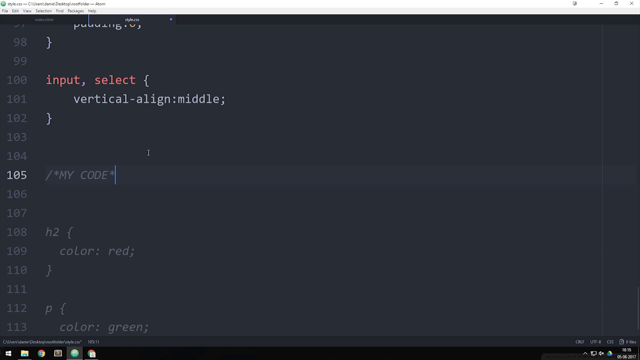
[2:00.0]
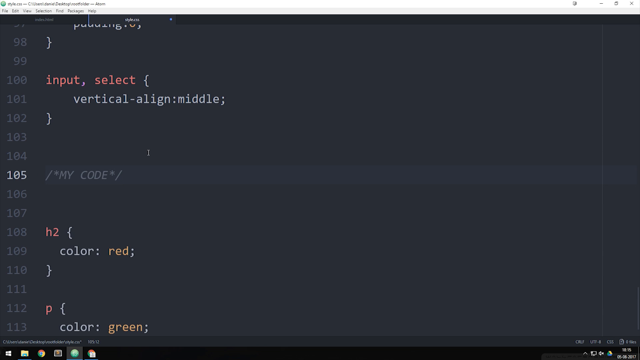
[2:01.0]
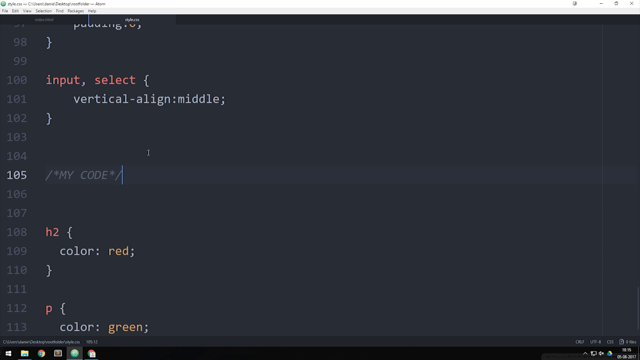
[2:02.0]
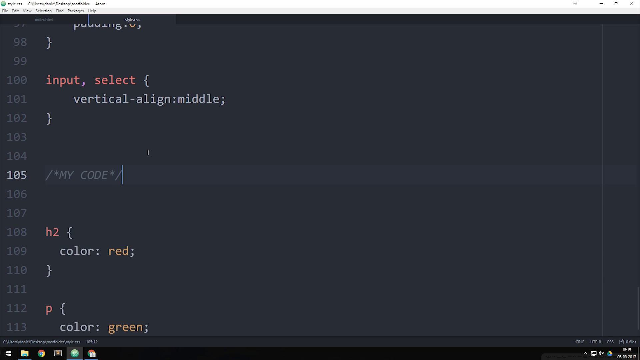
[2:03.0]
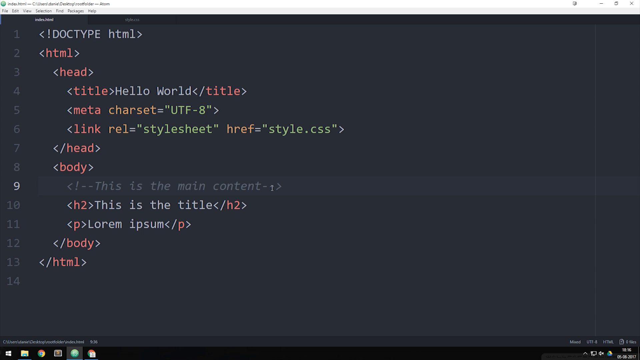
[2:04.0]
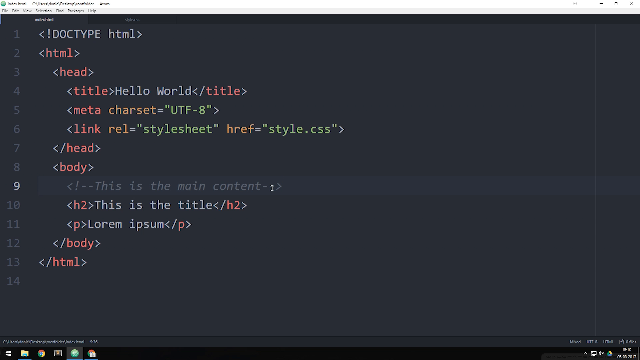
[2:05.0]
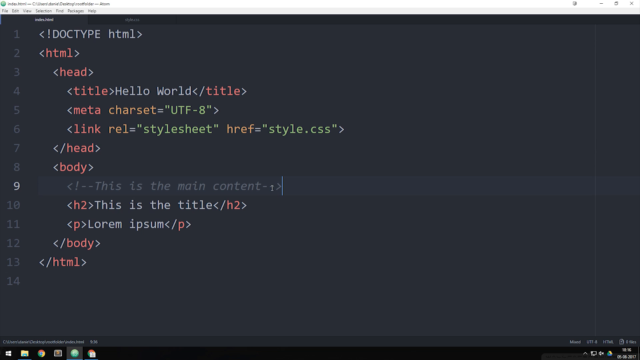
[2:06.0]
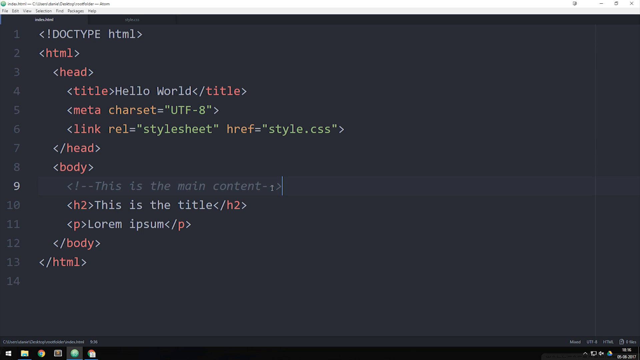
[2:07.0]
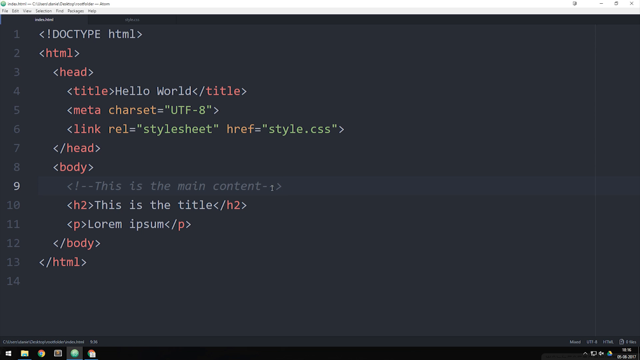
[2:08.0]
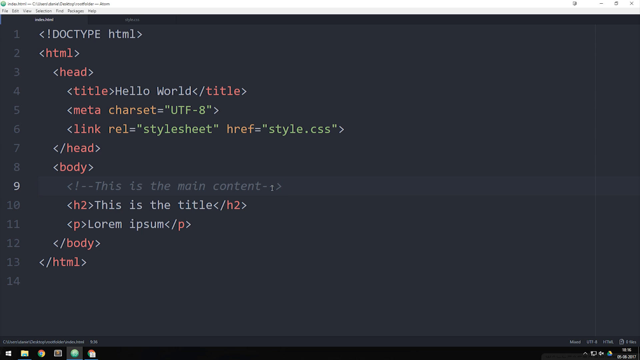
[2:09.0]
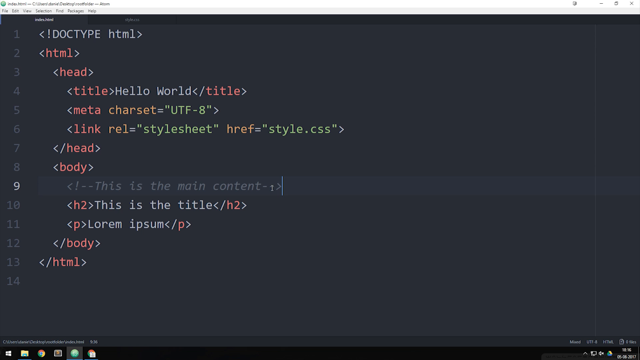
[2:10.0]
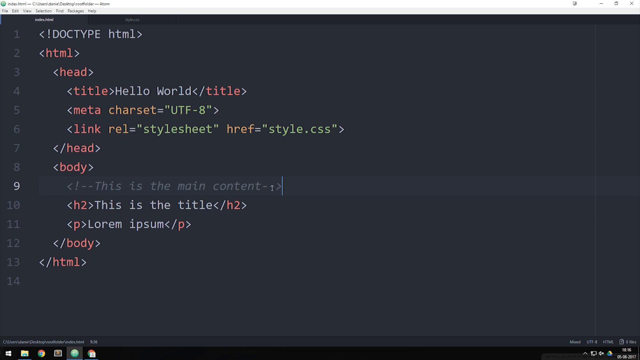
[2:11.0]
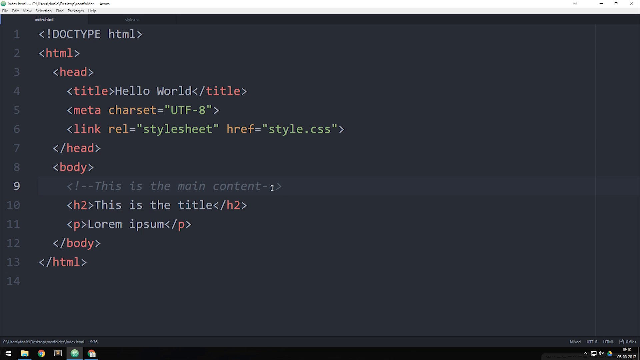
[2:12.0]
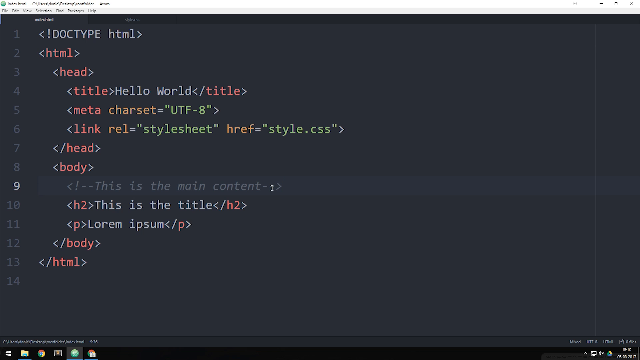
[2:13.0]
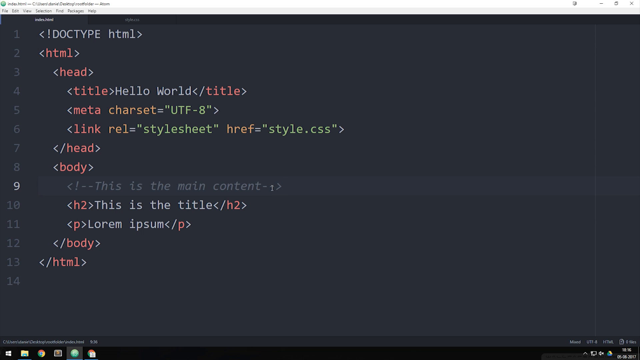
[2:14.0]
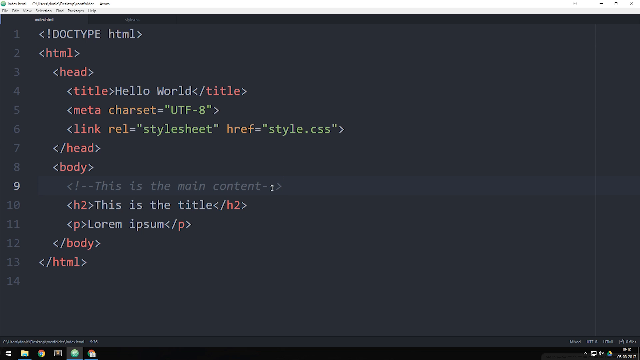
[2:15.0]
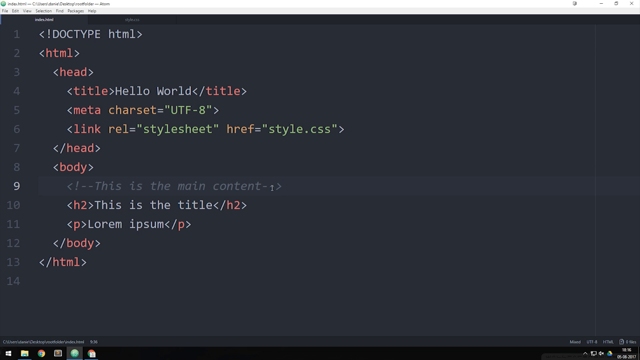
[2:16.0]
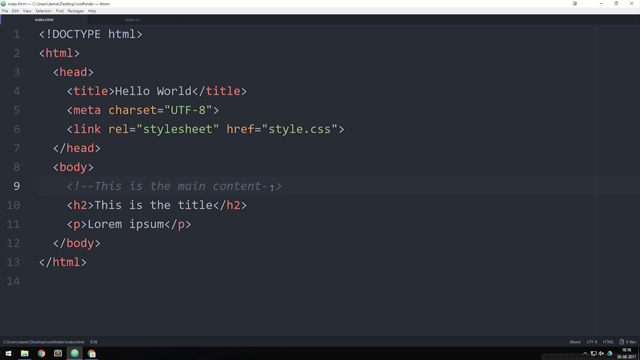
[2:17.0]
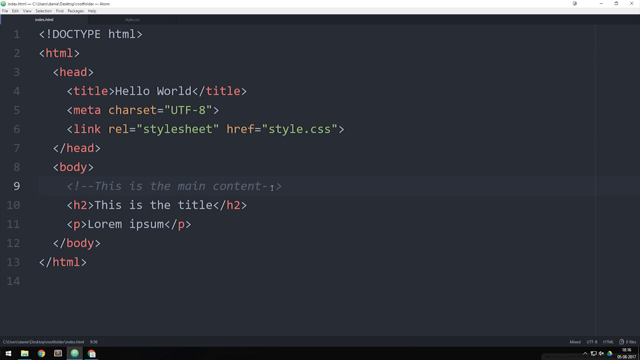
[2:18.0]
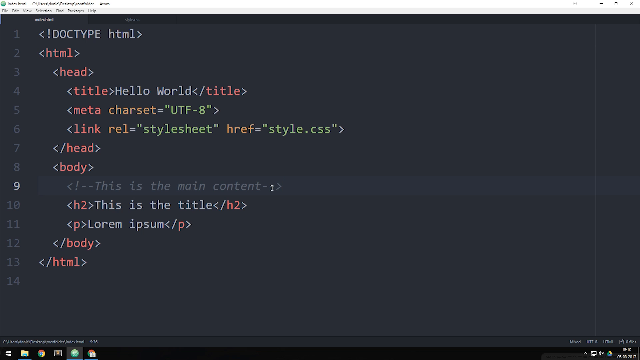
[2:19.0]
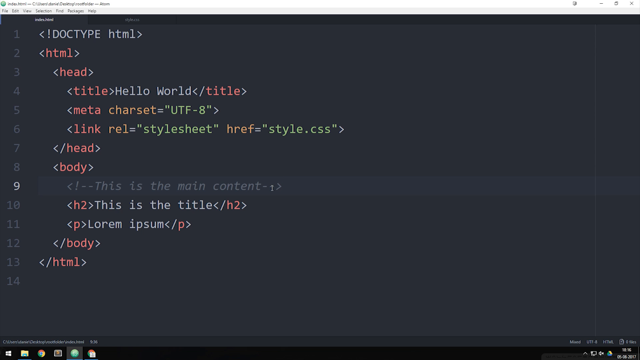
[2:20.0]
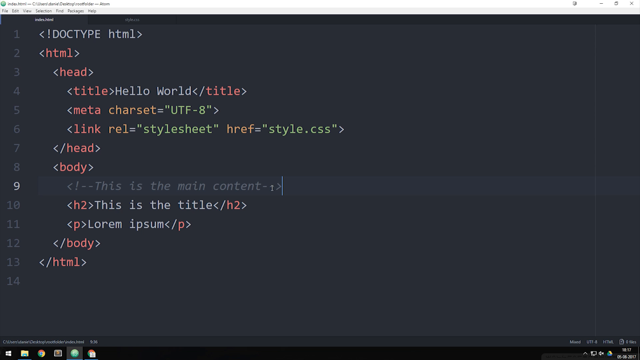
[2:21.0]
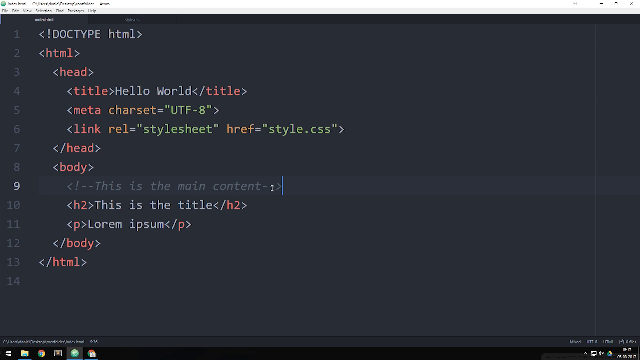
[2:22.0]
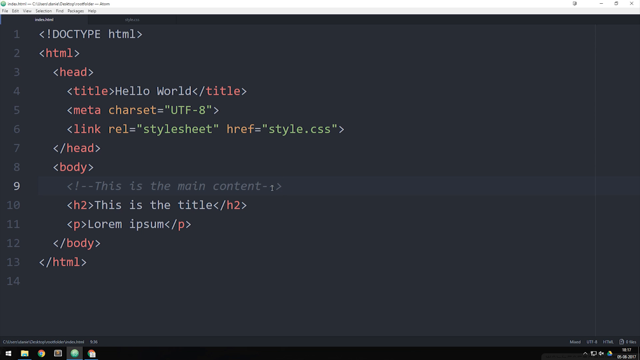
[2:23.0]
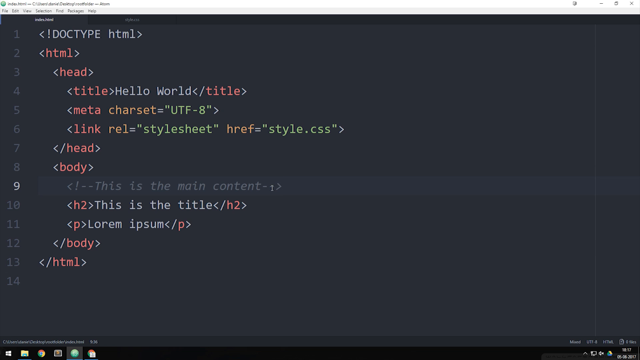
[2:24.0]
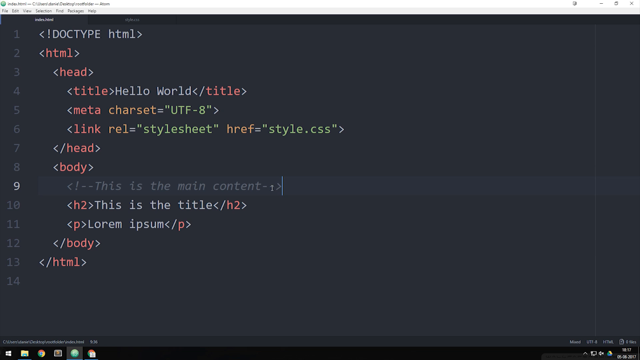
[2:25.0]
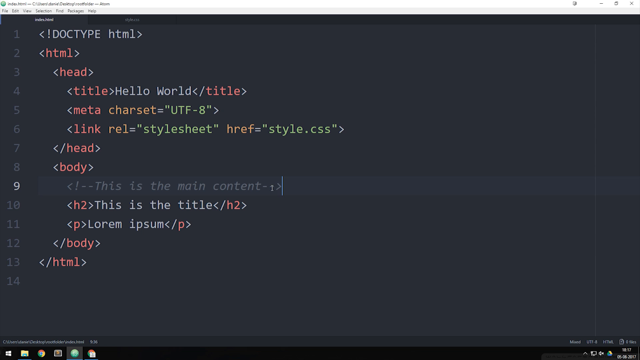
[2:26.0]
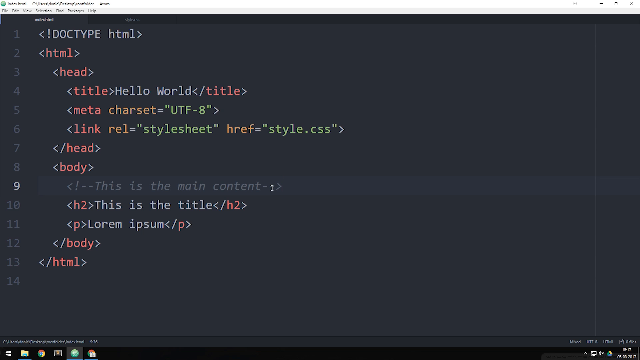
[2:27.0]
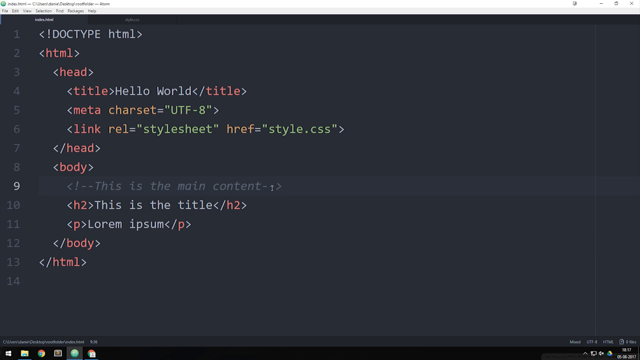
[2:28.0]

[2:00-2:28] HTML code is on a dark background, with more code being typed. Line 105 is highlighted, with a cursor right in front of the line "\* my code *". Below it, line 108 says "H2", line 109 is "color red", and line 110 closes that section of the code. At line 105 the person types a backslash again, and the cursor blinks there for a while. Then it disappears and the view changes to line 9, which says "this is the main content", where the cursor blinks and stays. Underneath is header 2, "This is the title", then P, "Lorem Ipsum"; line 12 is the body and line 13 is HTML. This is the beginning area of the code, and the screen stays there until the end, with the white line of the cursor blinking at line 9 and nothing typed.